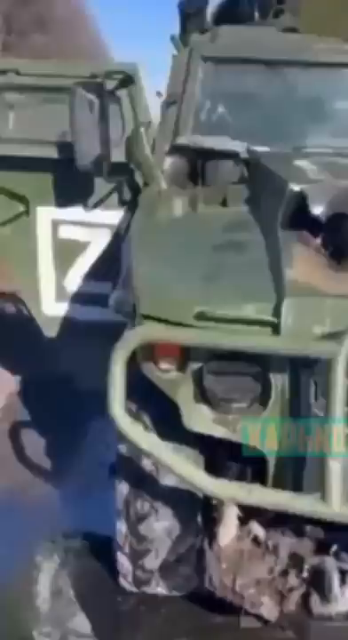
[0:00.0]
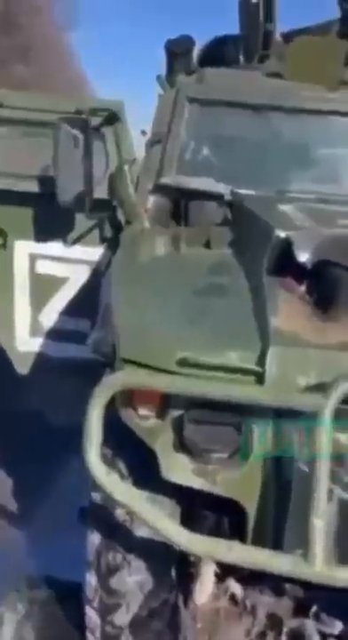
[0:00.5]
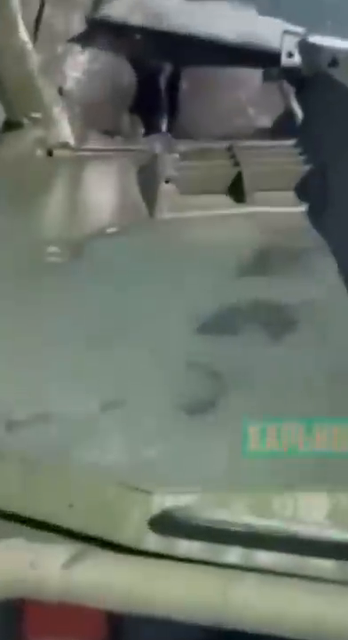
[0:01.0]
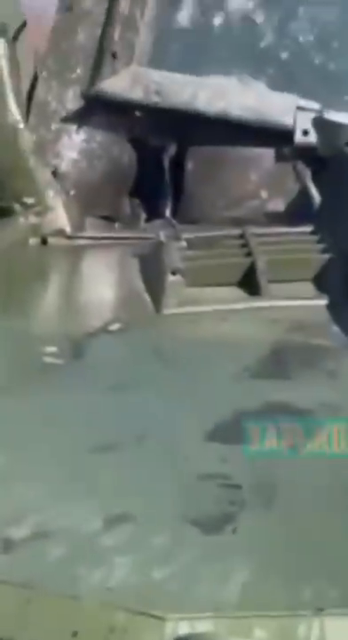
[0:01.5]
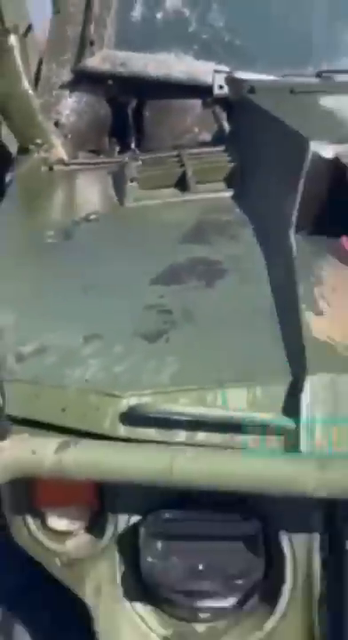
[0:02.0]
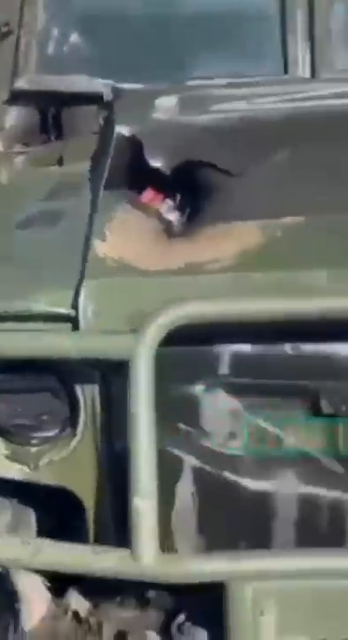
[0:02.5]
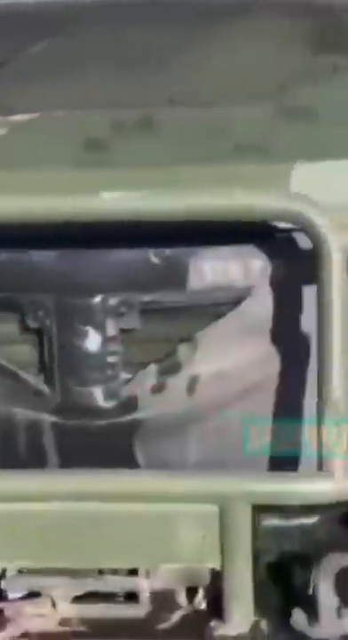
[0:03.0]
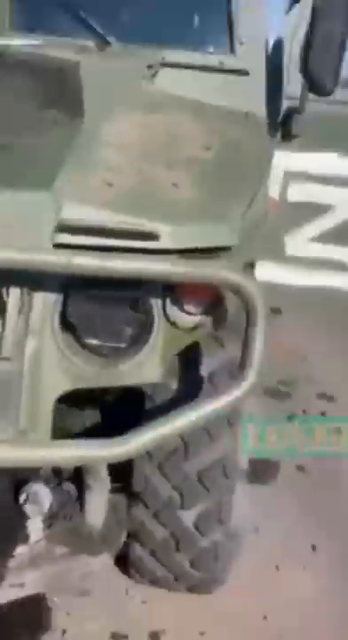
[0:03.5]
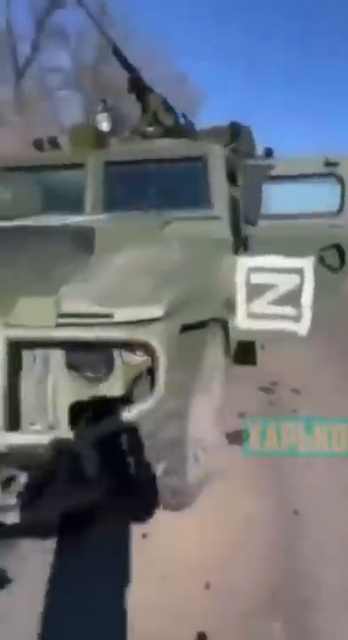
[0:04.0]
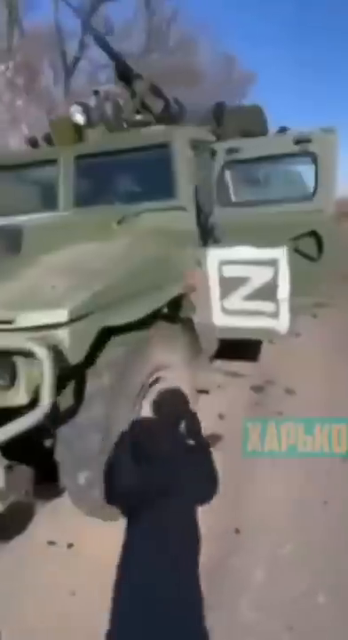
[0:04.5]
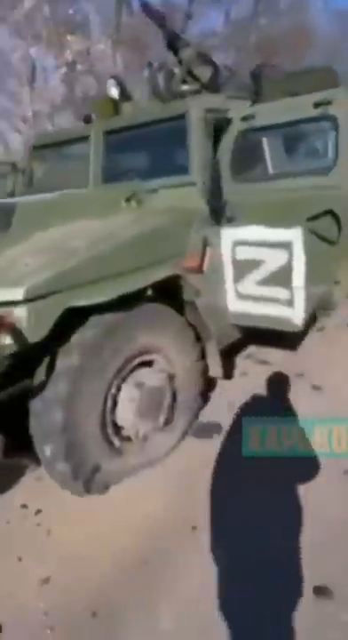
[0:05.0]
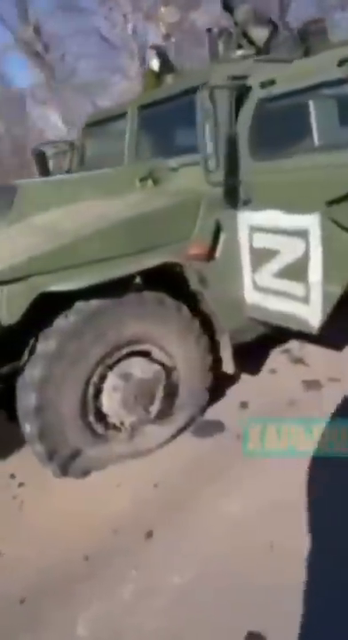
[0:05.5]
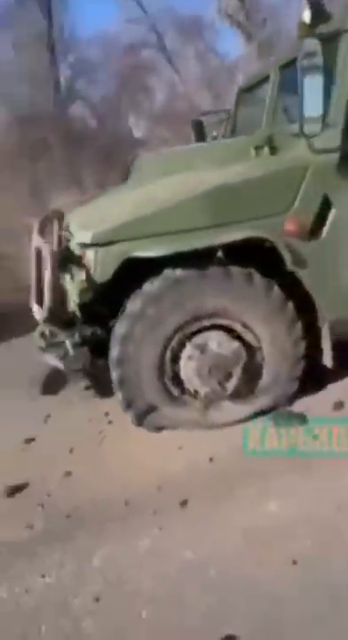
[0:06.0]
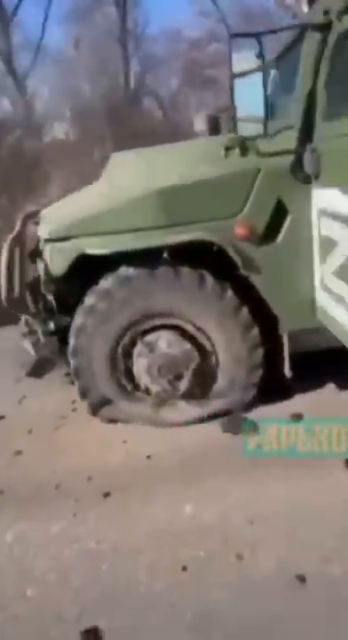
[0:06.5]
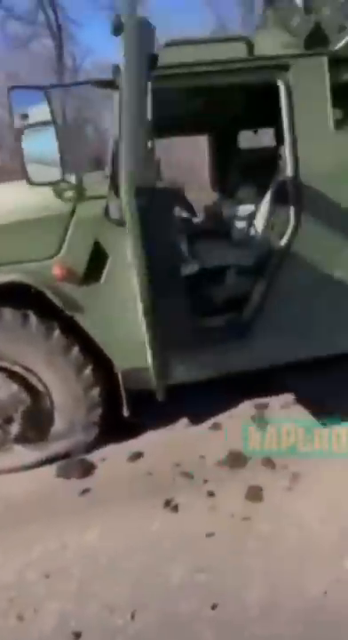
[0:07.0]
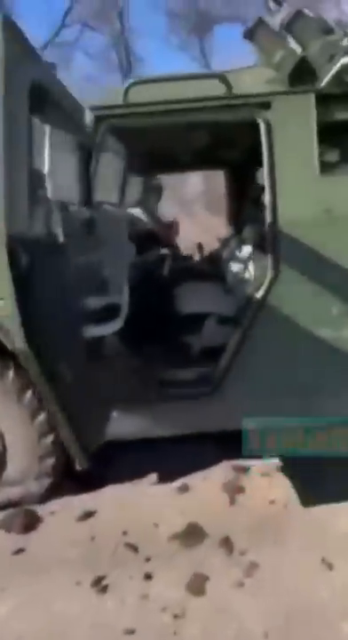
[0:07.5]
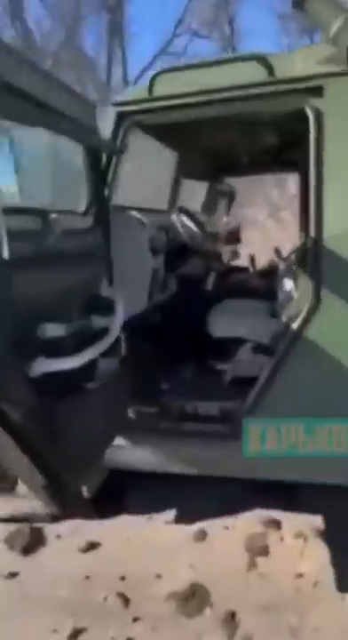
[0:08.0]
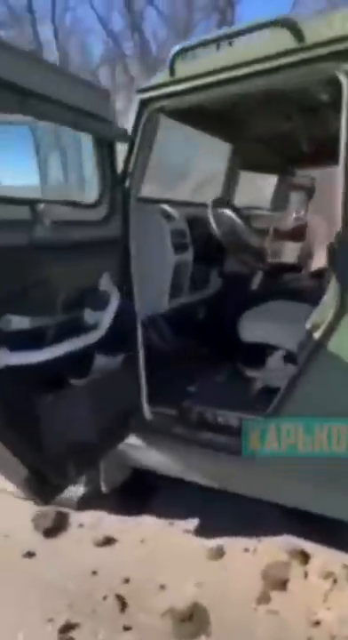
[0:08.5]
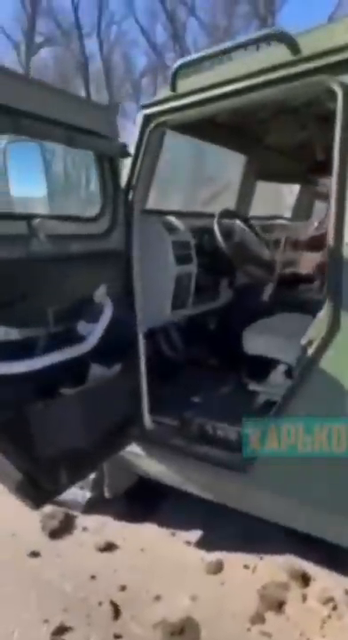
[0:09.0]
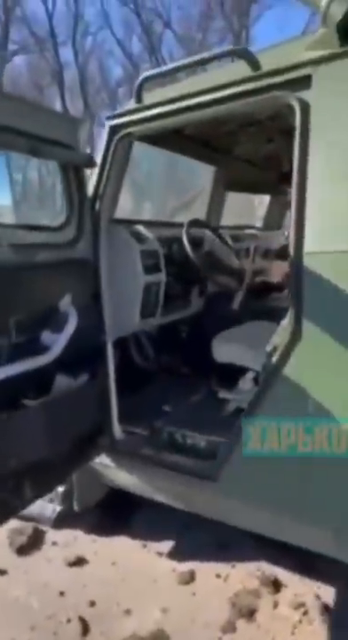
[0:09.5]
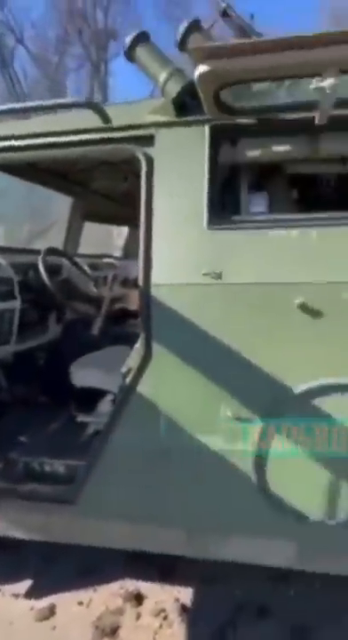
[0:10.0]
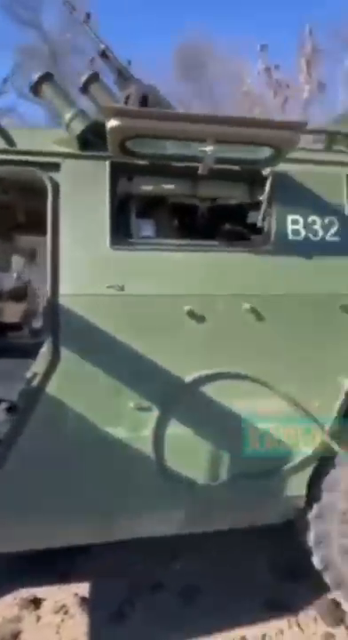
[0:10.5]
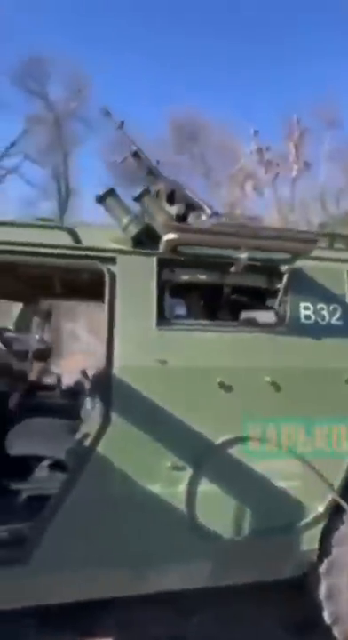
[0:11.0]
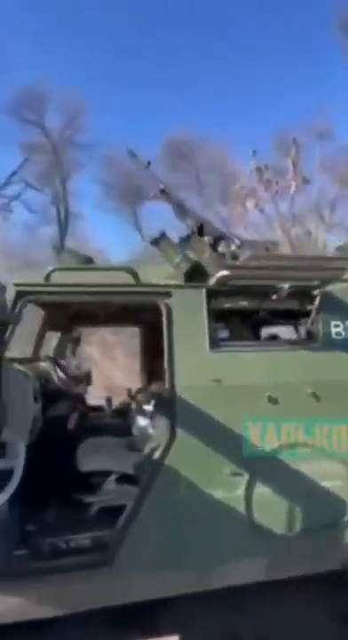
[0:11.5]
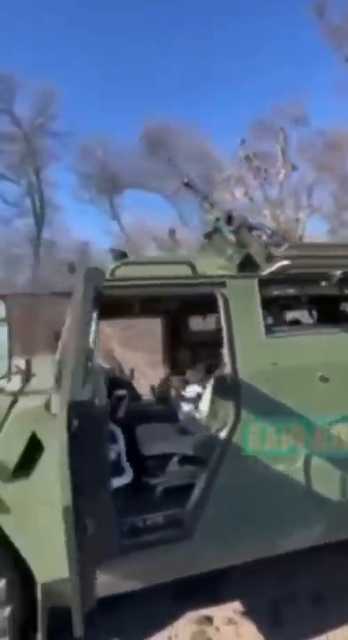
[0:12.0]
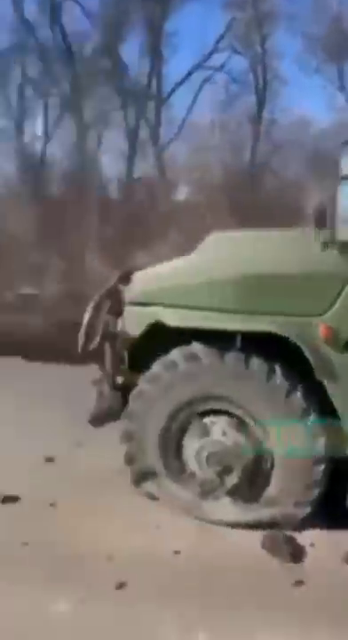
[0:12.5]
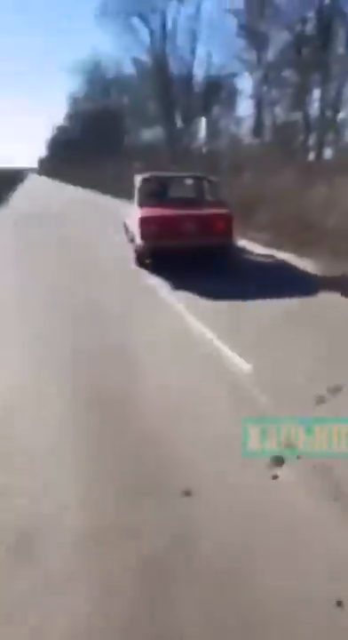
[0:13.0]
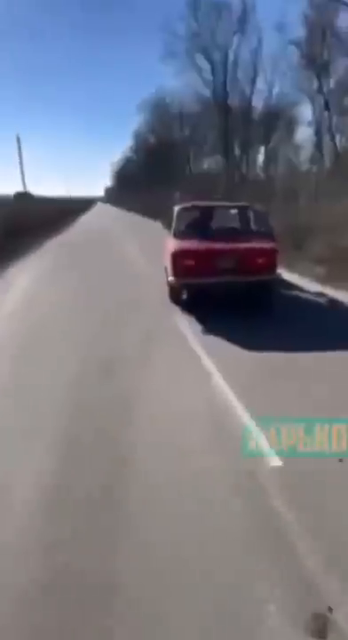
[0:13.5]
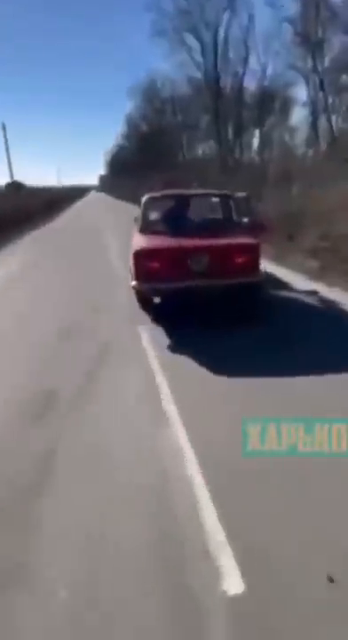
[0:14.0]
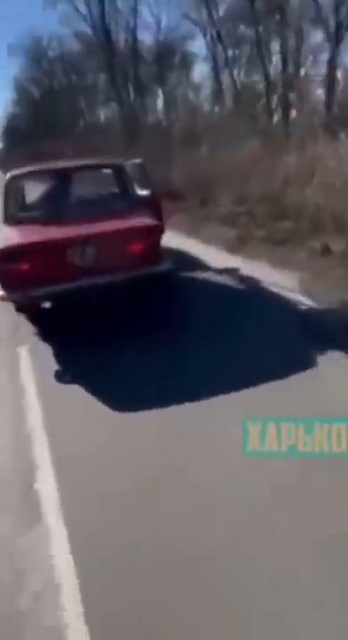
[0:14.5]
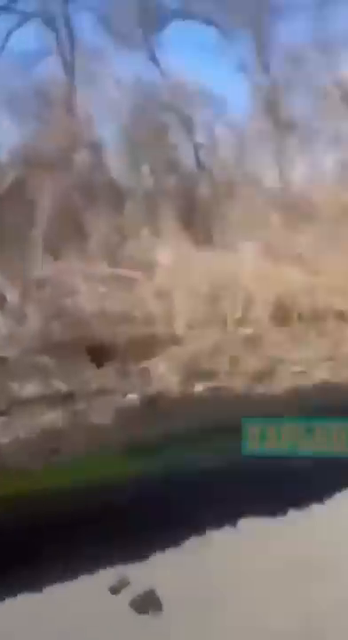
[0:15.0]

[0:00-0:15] What looks like some sort of Jeep-type armoured vehicle is on a road and appears to have been damaged, perhaps by driving over a landmine or some sort of bomb, or possibly by a missile strike. A person walking around the vehicle is taking video, and he looks at the inside of the armoured vehicle. There is a flat tyre at the front. He then looks at the vehicle head on, showing that the whole front of the vehicle looks as if some sort of missile or projectile has blown right through it, also damaging the engine and bonnet. The person going around the vehicle then looks towards a red civilian car in front of the damaged armoured vehicle; it appears to be some kind of Russian-make vehicle. It is unclear whether the people filming are civilians who have come across the damaged military vehicle or are filming it for military purposes.